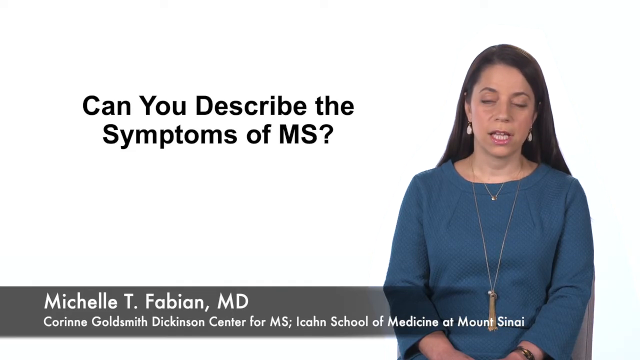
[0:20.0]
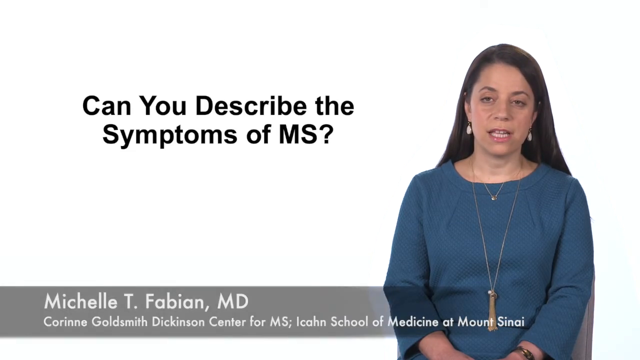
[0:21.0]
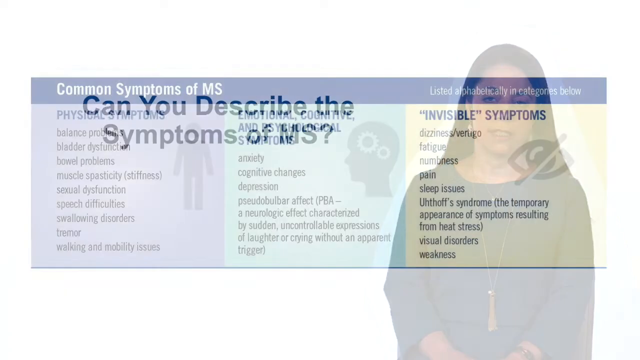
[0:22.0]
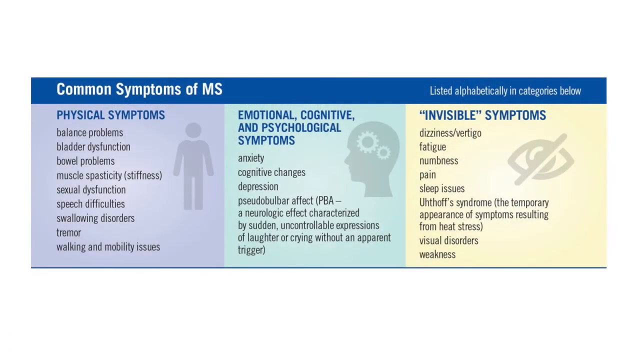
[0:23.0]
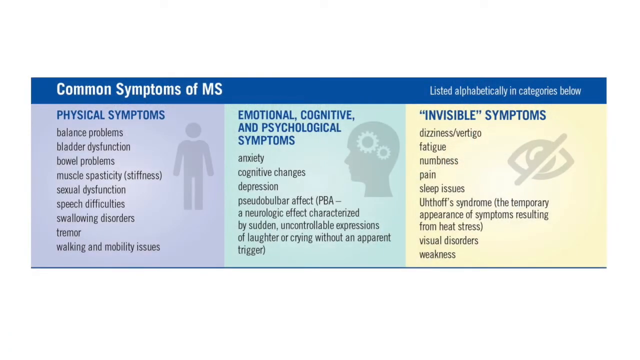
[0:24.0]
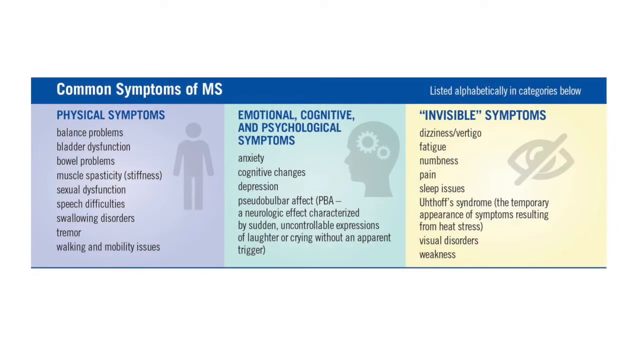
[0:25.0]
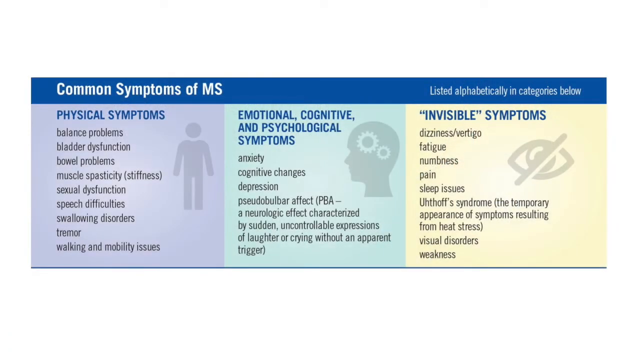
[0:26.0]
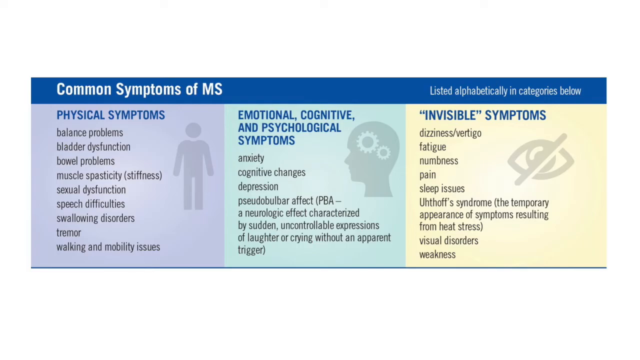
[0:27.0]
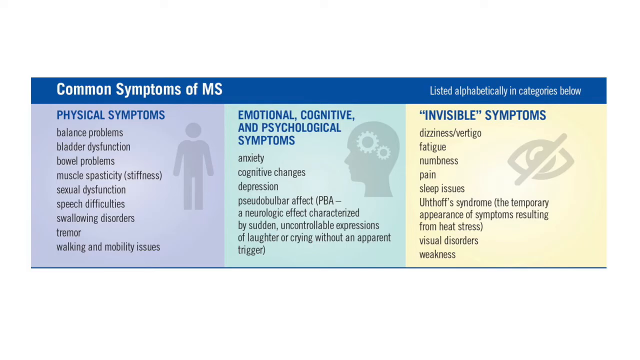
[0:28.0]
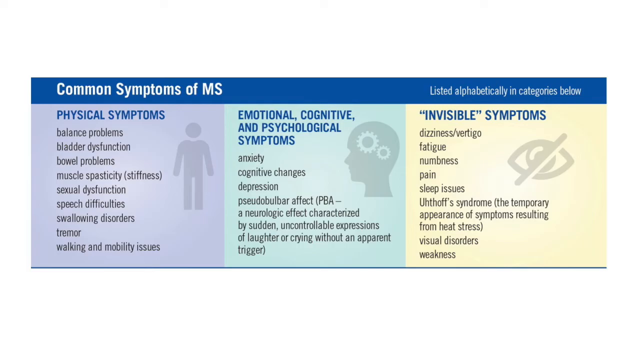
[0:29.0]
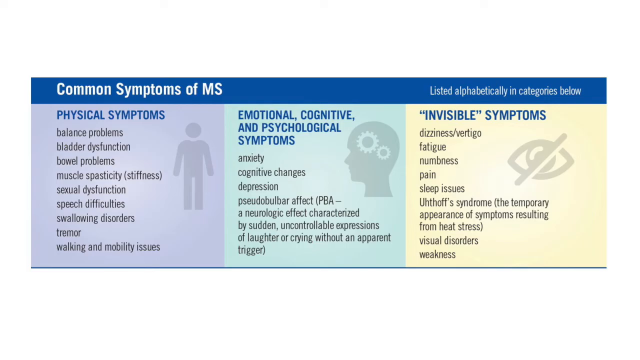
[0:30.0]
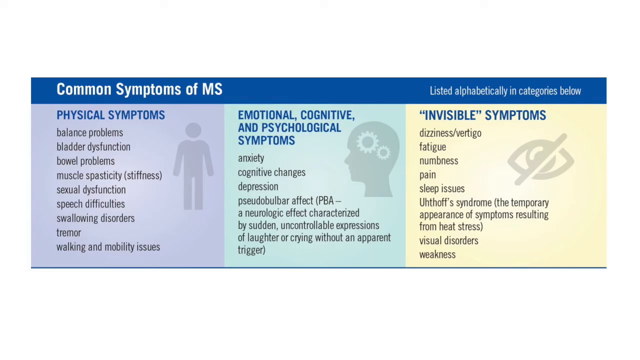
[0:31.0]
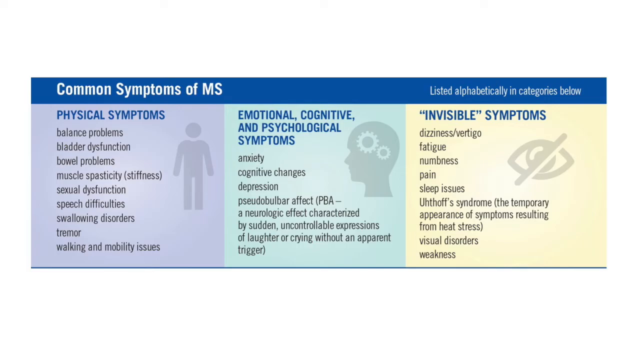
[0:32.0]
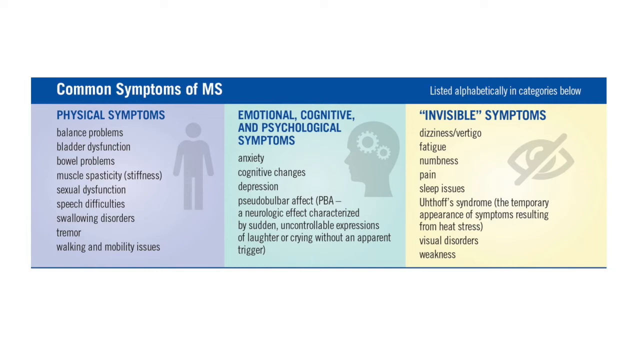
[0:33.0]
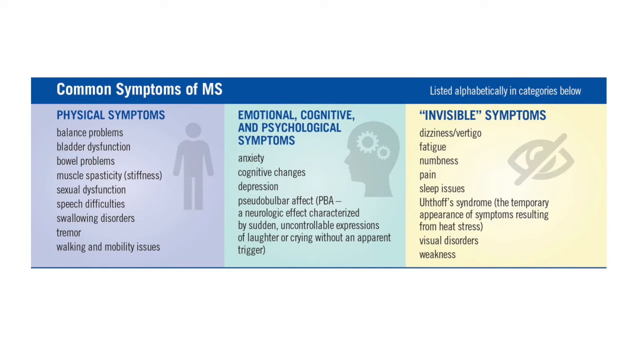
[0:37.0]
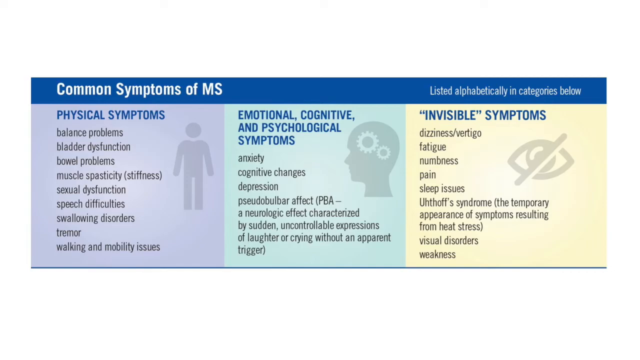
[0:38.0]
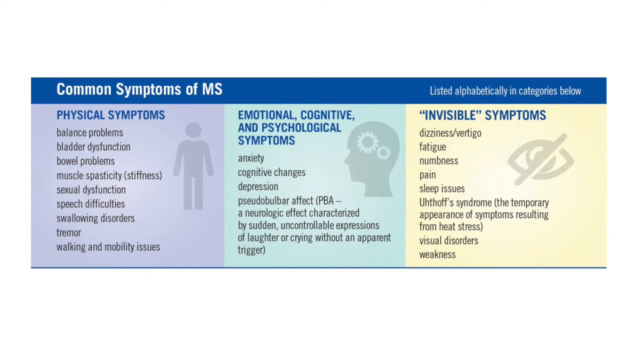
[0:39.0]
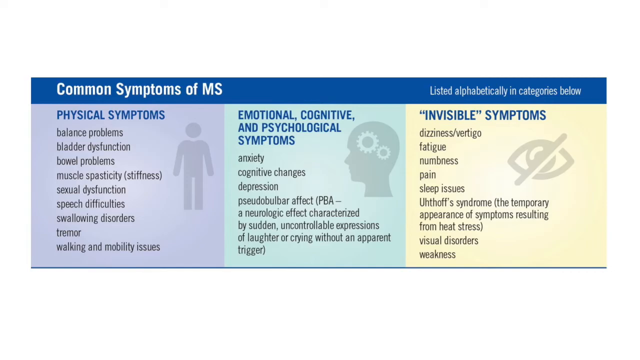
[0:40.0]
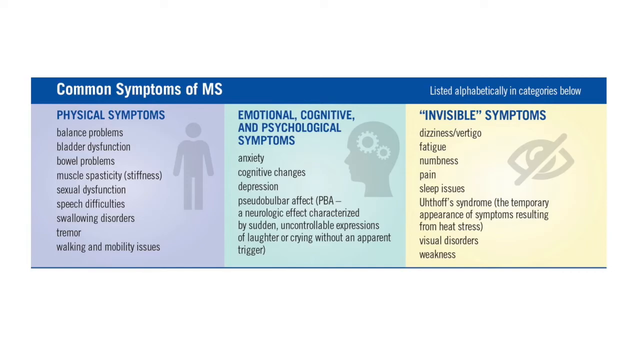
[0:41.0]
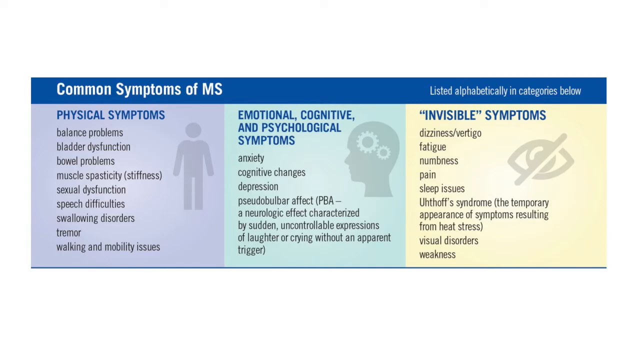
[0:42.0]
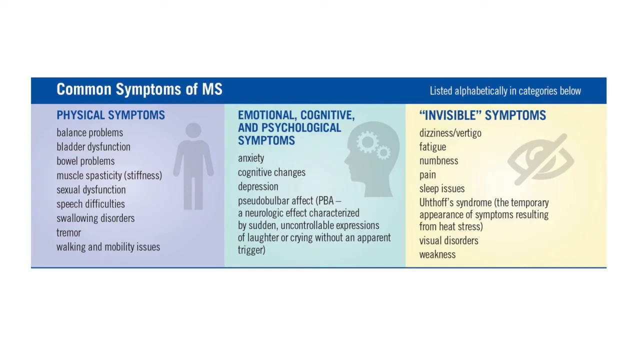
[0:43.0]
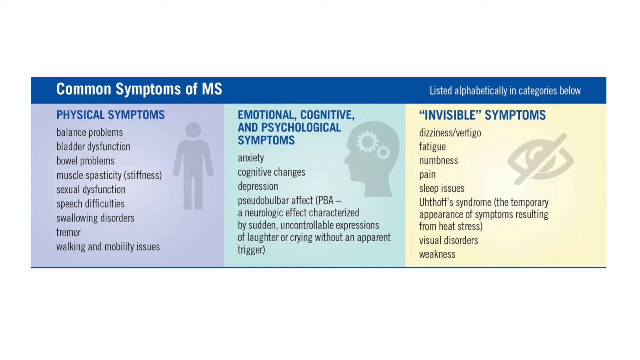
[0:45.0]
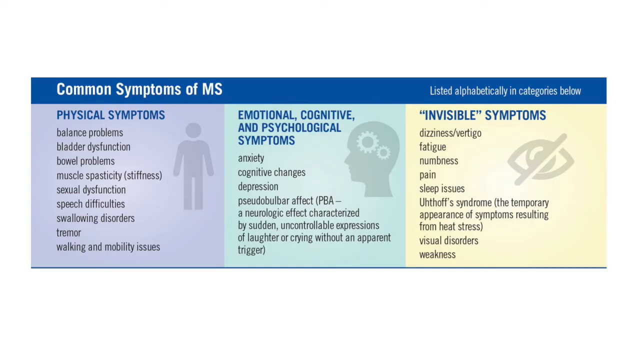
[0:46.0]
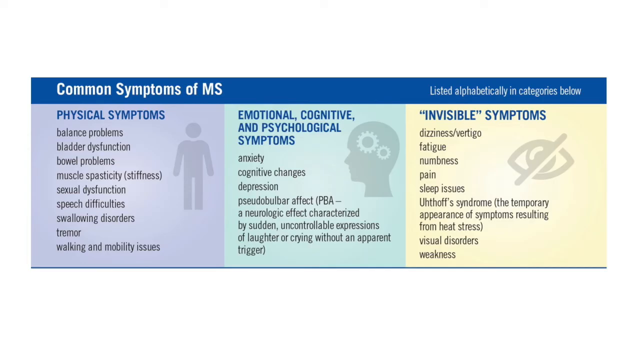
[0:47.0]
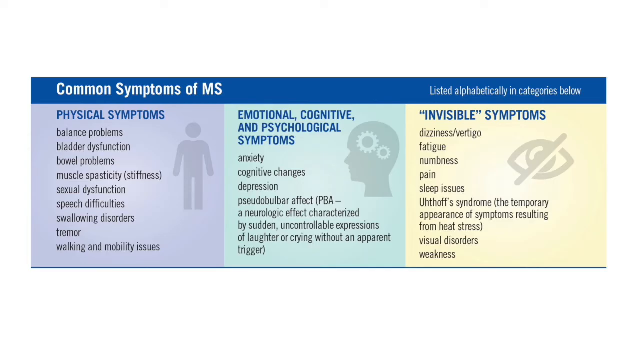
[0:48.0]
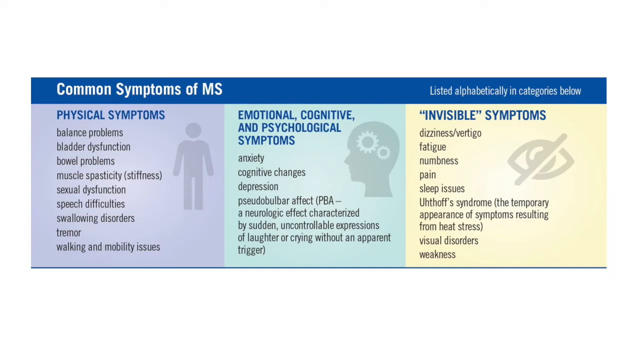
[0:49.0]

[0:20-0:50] The professor speaks to the camera, then the screen changes to a diagram. Across the top is a blue bar reading "Common Symptoms of MS" on the left-hand side and, in smaller print on the right-hand side, "listed alphabetically in categories below". The diagram is split into three equal-size rectangles. The left one, on a purple background, reads "physical symptoms" and lists "balance problems, bladder dysfunction, bowel problems, muscle spasticity, stiffness, sexual dysfunction, speech difficulties, swallowing disorders, tremor, walking, and mobility issues". The center column is headed in blue "emotional, cognitive, and psychological symptoms", with a list in black below: "anxiety, cognitive changes, depression, pseudobulbar affect, PBA, a neurological effect characterized by sudden, uncontrollable expressions of laughter or crying without an apparent trigger". The far right column, against yellow, reads "invisible symptoms" and has a graphic of a crossed-out eye. Below it is listed "dizziness, vertigo, fatigue, numbness, pain, sleep issues, Uhthoff's syndrome, the temporary appearance of symptoms resulting from heat stress, visual disorders, and weakness".